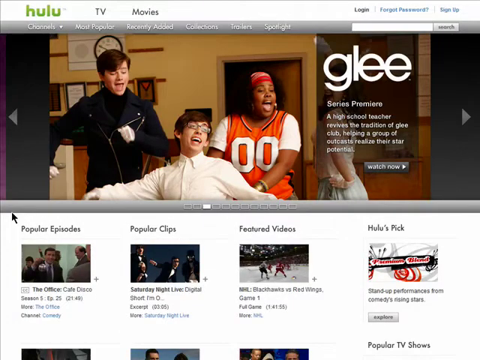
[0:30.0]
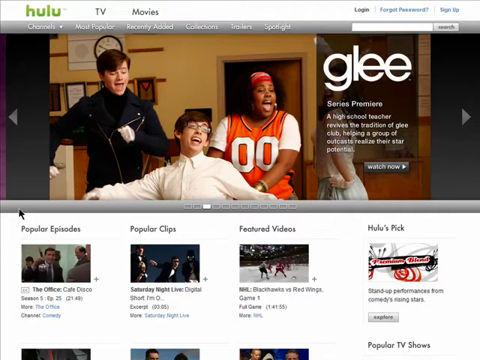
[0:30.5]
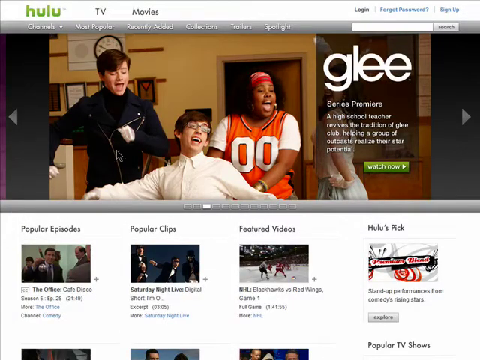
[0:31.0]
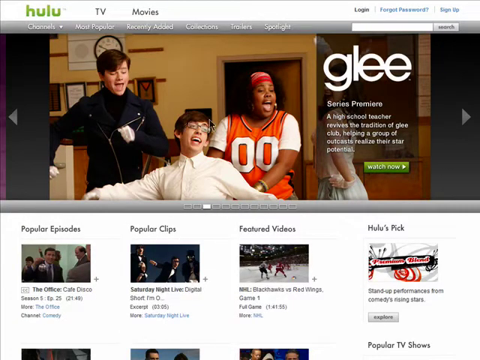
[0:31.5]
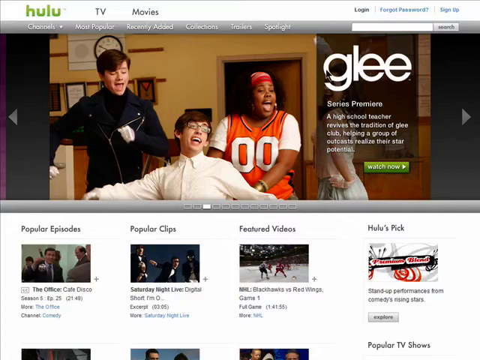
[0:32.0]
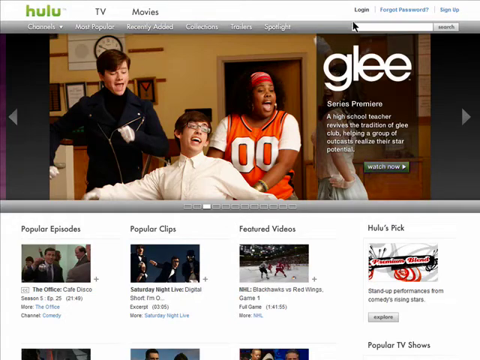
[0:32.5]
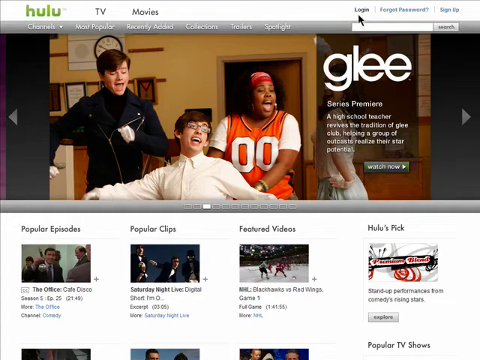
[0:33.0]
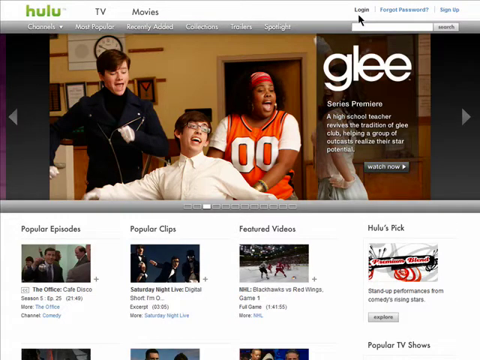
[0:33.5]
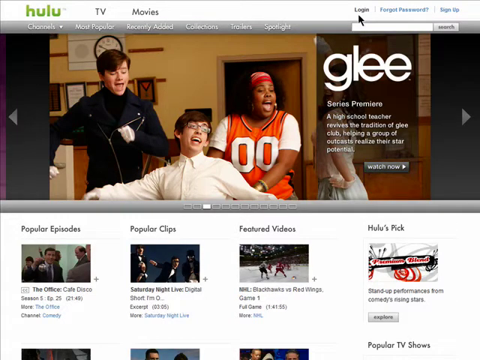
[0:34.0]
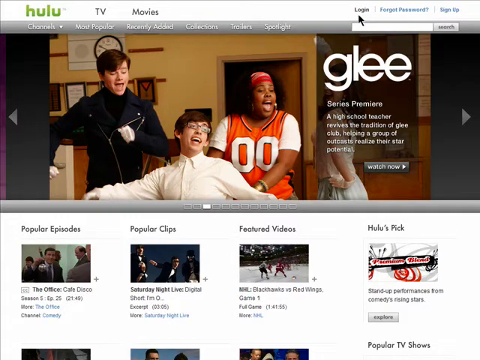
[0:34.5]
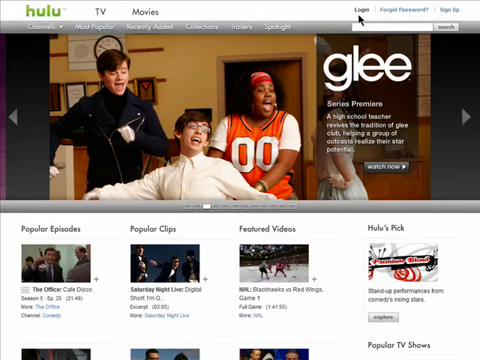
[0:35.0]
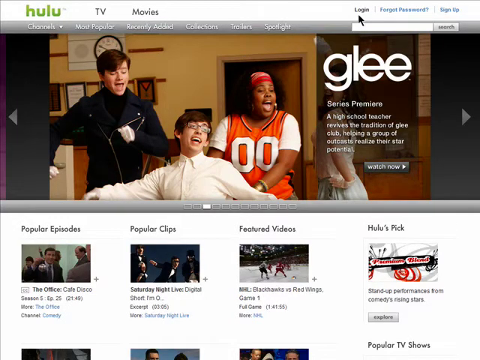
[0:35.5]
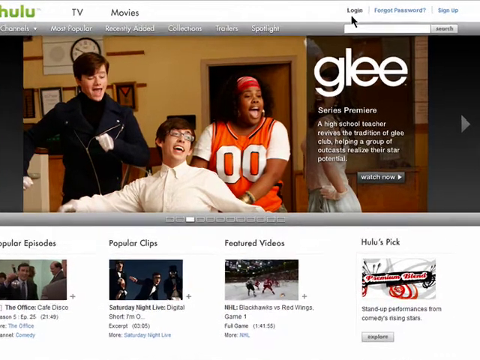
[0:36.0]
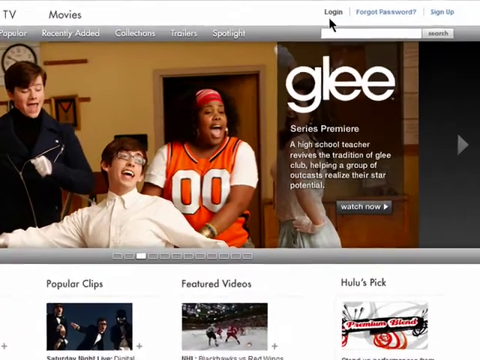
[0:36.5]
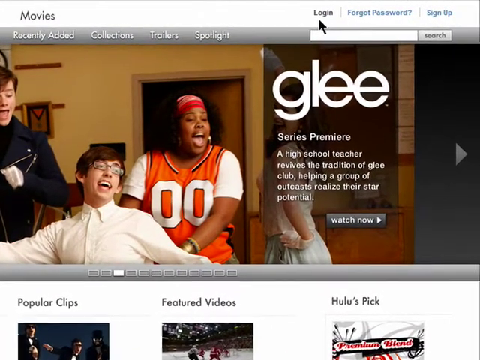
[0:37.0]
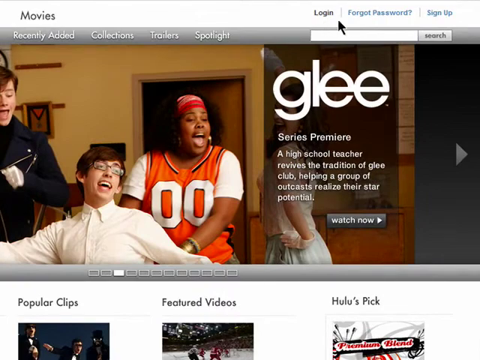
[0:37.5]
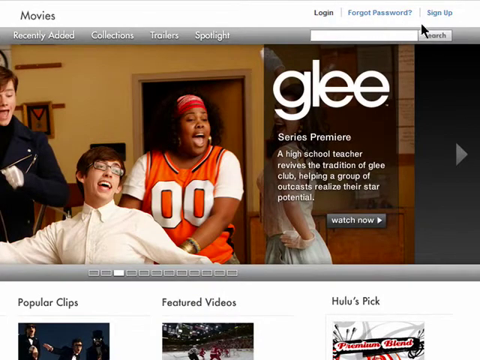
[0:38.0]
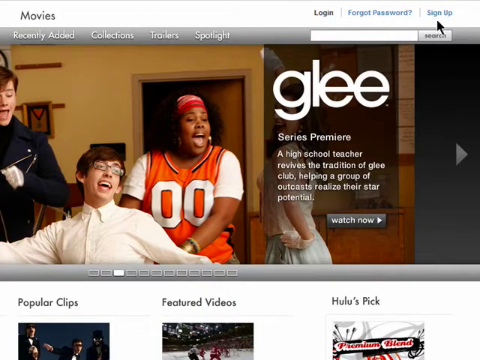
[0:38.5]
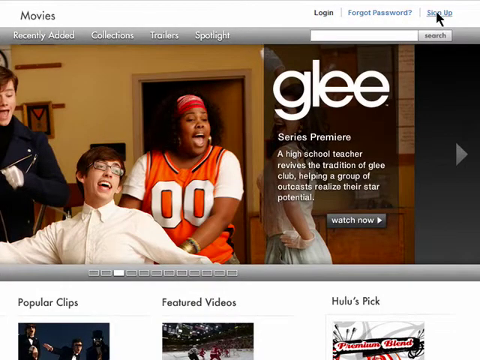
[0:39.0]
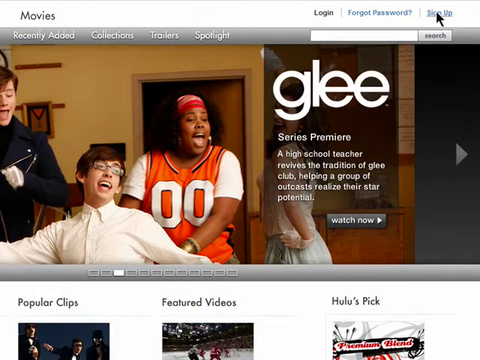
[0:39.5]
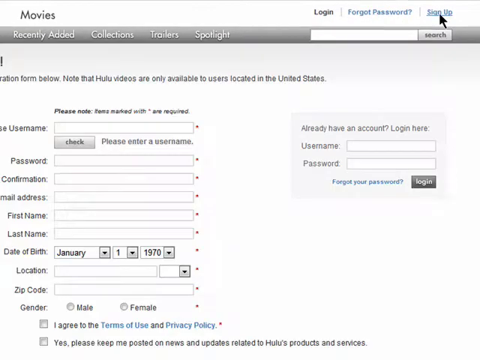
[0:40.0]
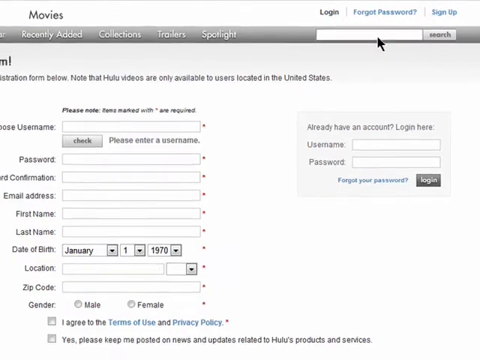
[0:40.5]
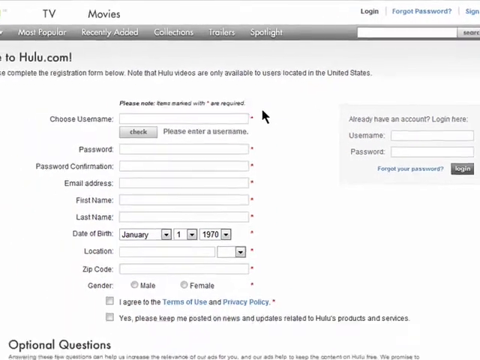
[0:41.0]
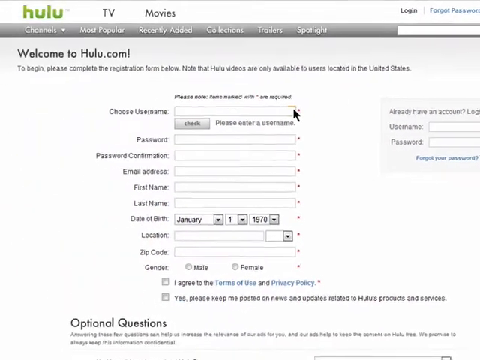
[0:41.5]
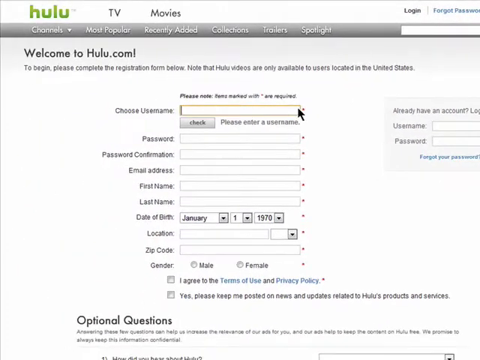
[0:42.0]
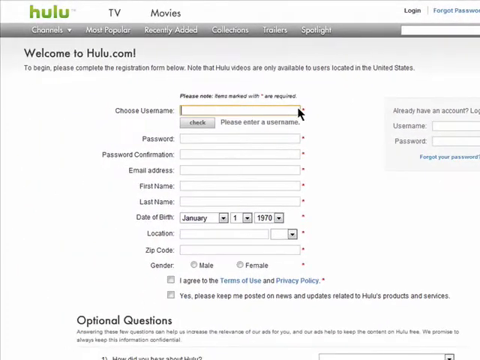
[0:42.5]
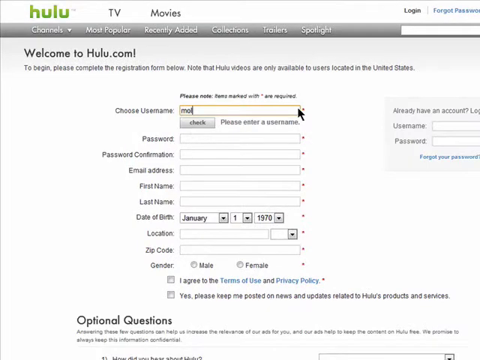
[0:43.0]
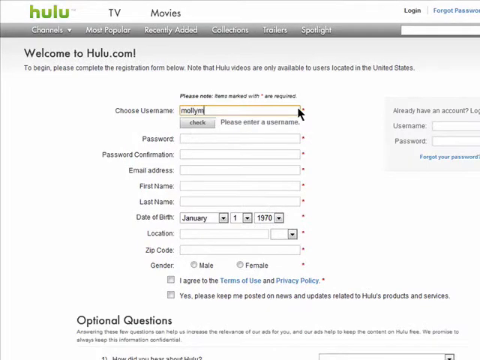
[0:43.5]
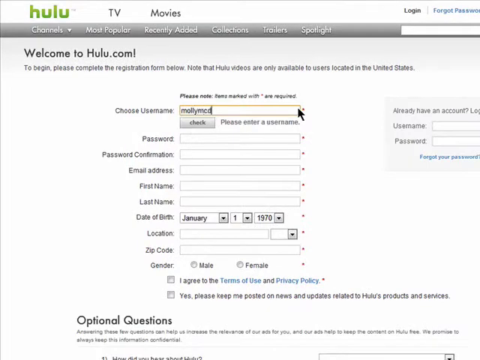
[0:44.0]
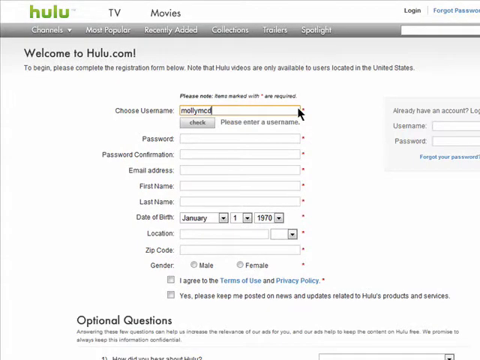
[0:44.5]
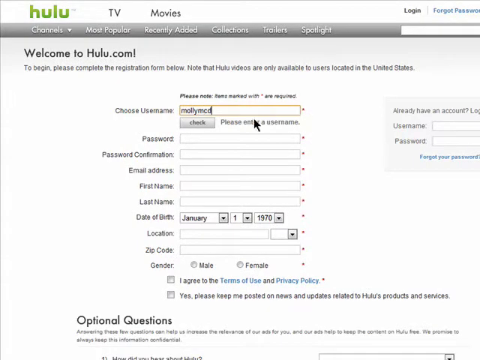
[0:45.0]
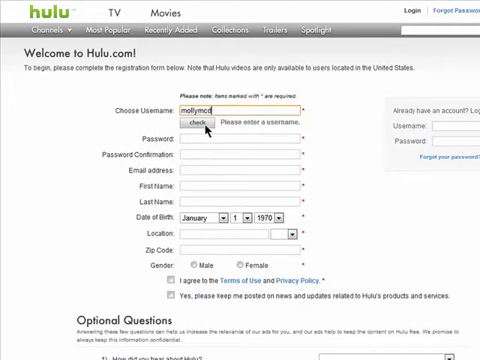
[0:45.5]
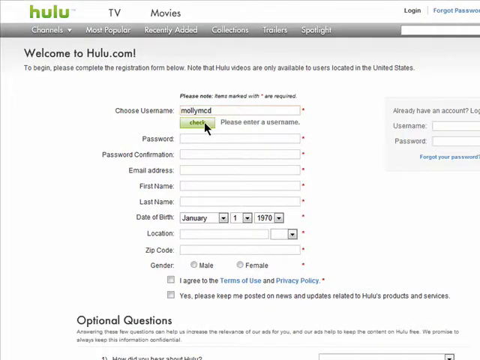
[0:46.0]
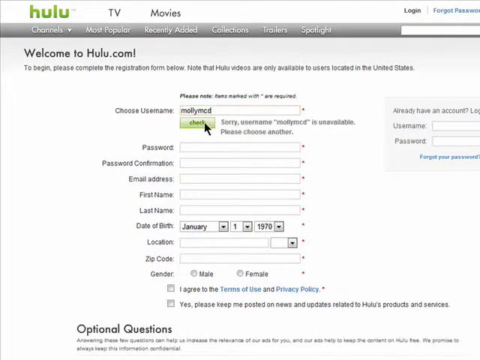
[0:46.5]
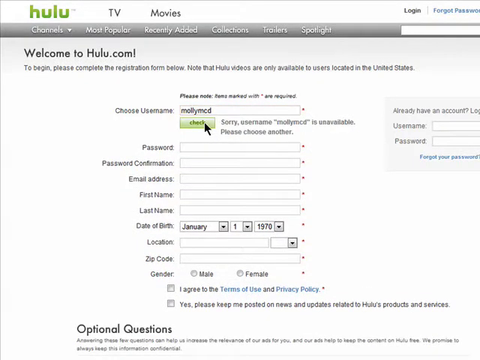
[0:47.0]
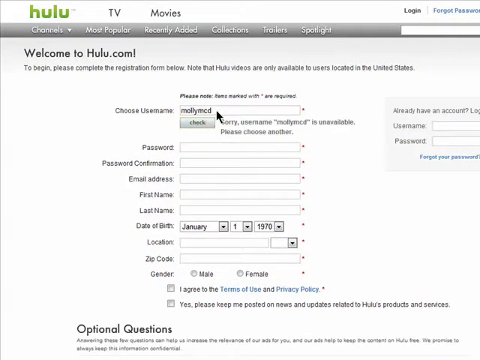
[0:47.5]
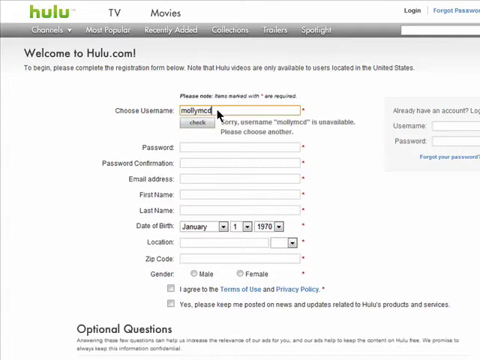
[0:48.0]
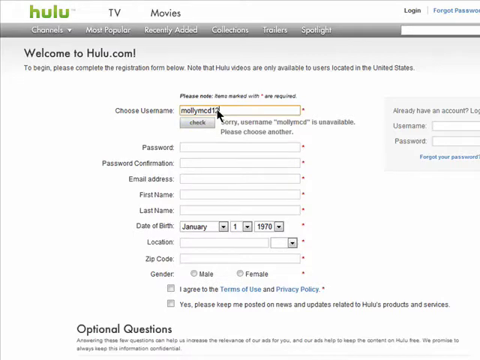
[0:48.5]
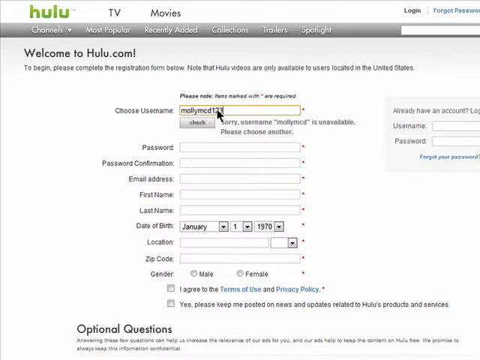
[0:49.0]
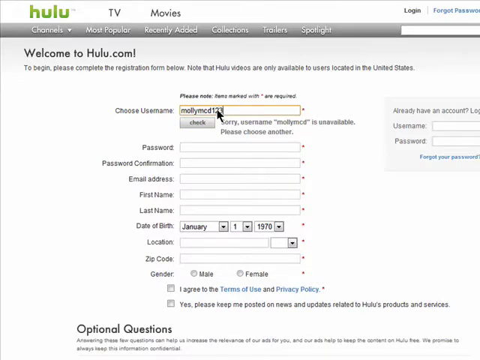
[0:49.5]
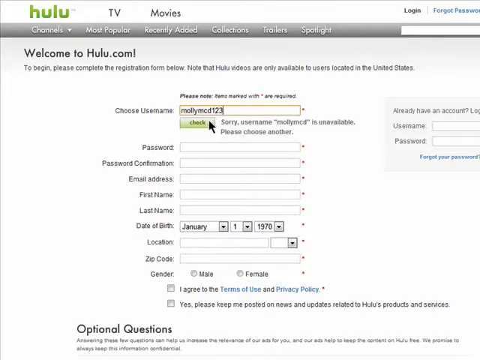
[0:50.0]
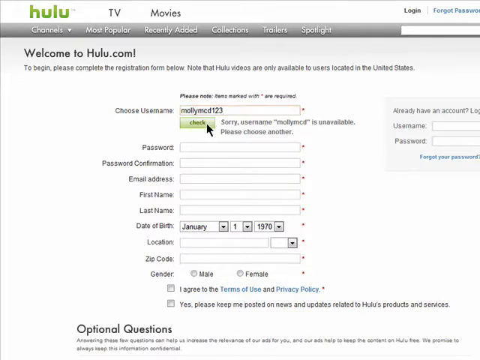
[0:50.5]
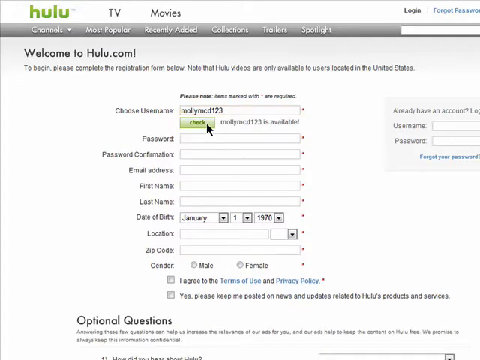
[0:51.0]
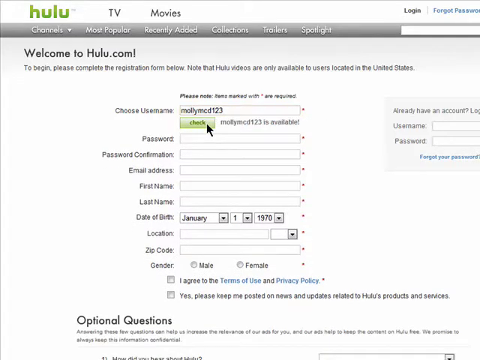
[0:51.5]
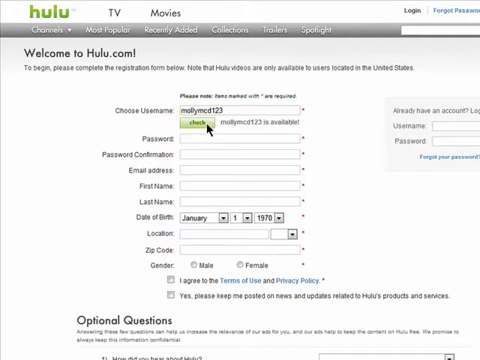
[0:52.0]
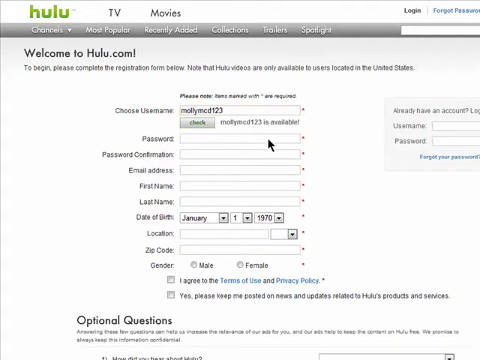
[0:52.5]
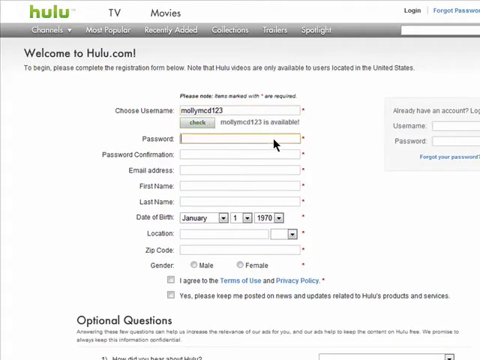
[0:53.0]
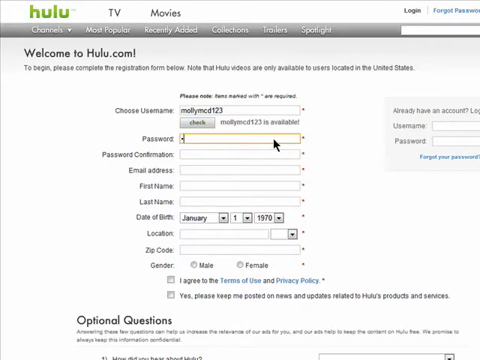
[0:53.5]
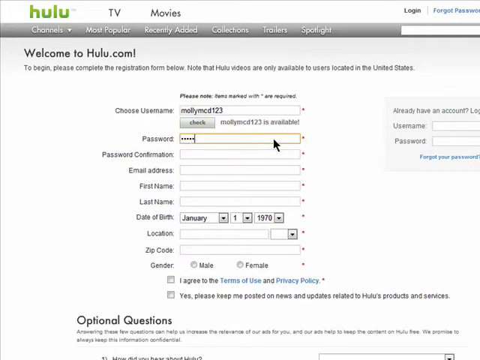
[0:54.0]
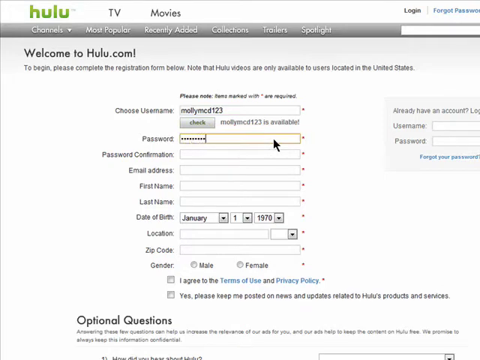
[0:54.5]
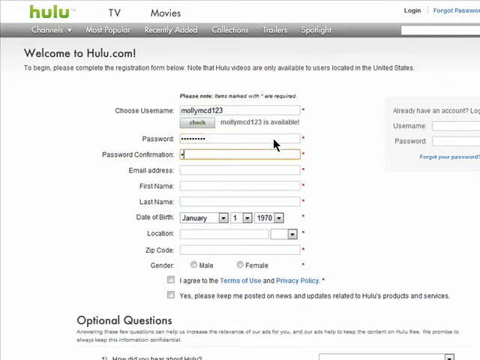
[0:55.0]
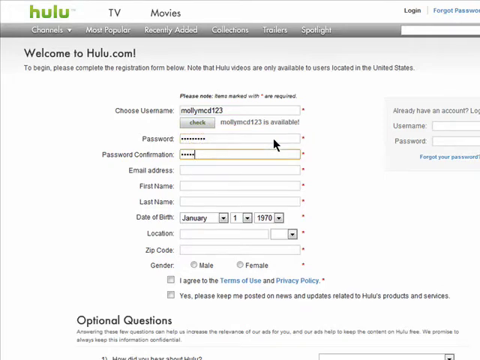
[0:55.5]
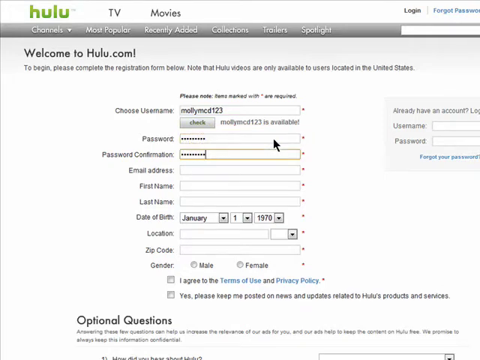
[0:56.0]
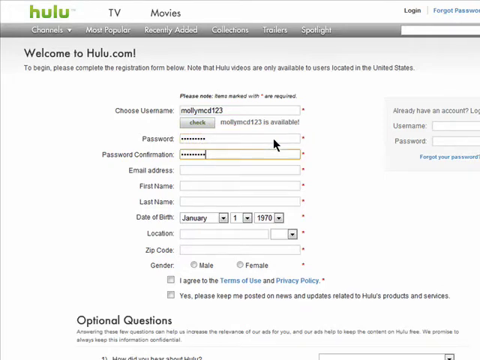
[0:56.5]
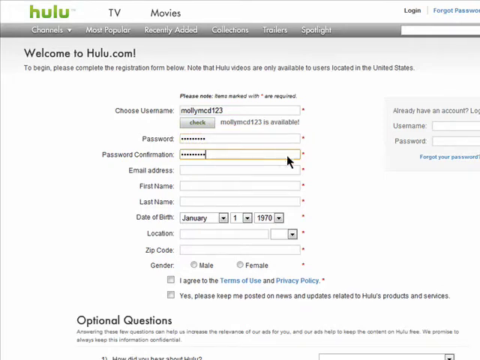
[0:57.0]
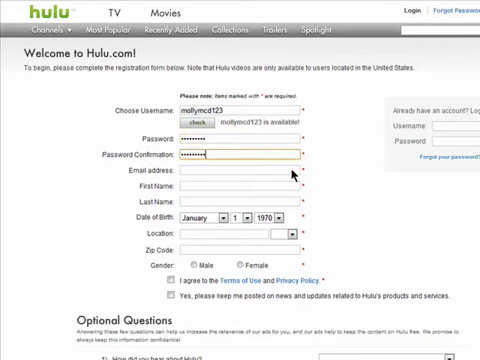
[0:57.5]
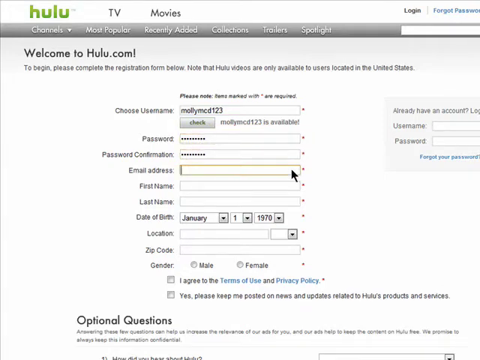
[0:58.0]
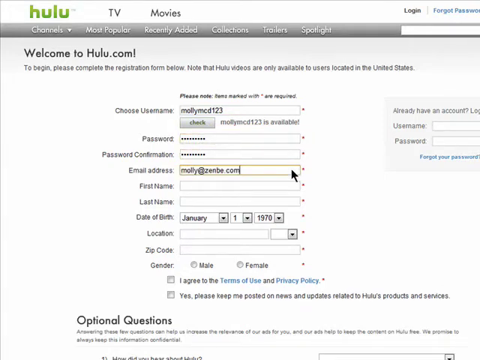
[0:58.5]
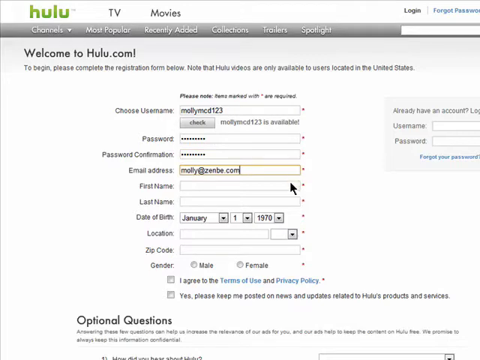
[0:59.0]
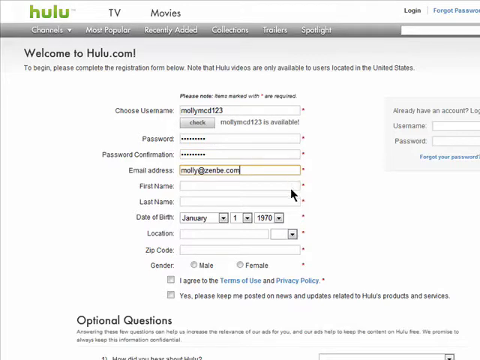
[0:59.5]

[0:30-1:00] The man is on the Hulu main menu, which shows popular episodes, popular clips, featured videos and Hulu pics. An image reads "Glee series premiere" with the text "A high school teacher revives the tradition of Glee club, helping a group of outcasts realize their potential," and there is a button to watch now. TV and movies are listed, along with channels, most popular, recently added, collections, trailers and spotlights. He moves his cursor to the login and then proceeds to sign up, and "welcome to Hulu.com" appears. He starts entering his information, choosing the username "mollymoot" and checking whether it is available; the message "mollymoot is unavailable. Please choose another" appears. He chooses "mollymoot123", checks again, and it is available. He types a password and confirms it with the same one. Next is an email address, where he enters molly@zen.com. Below that are fields for first name, last name, location, zip code and gender.